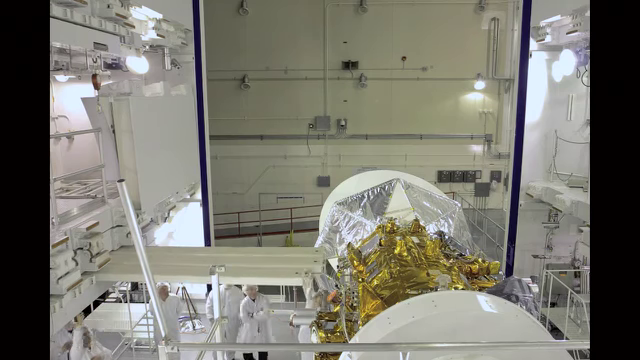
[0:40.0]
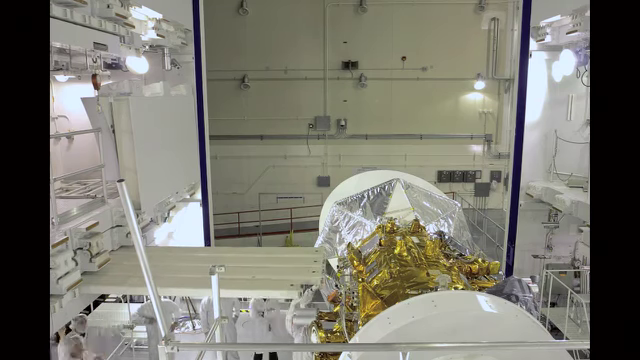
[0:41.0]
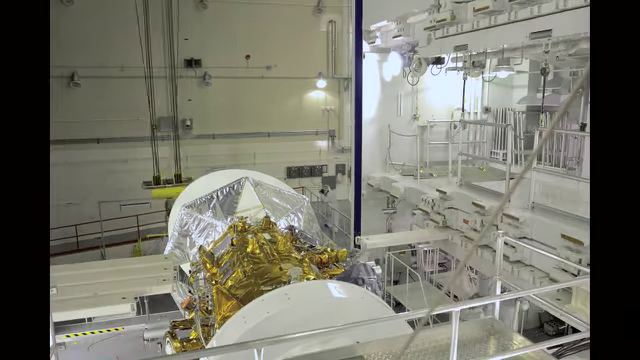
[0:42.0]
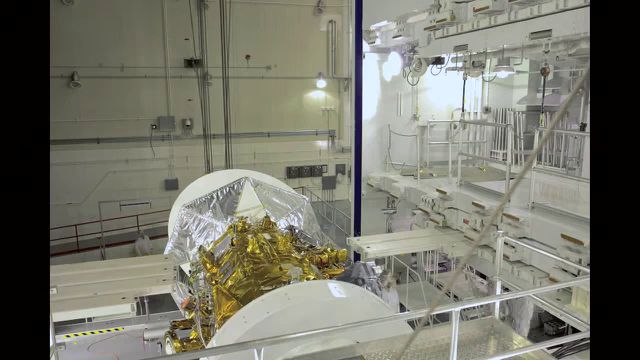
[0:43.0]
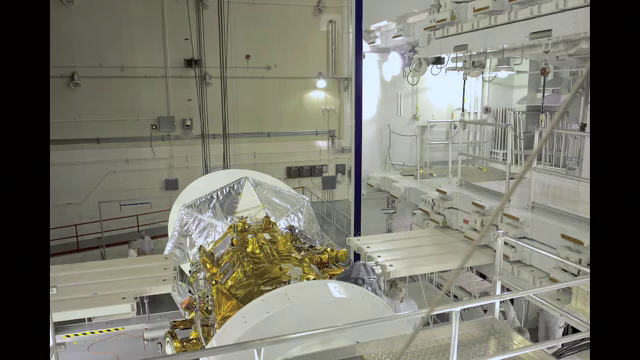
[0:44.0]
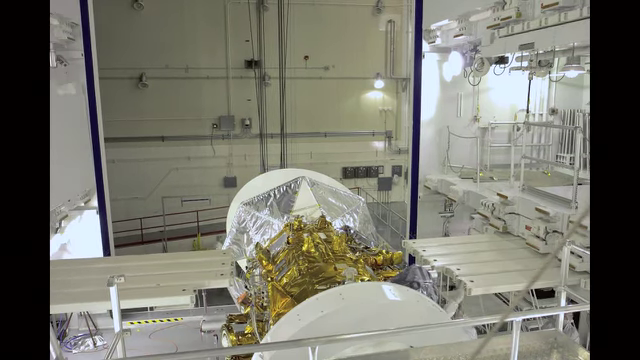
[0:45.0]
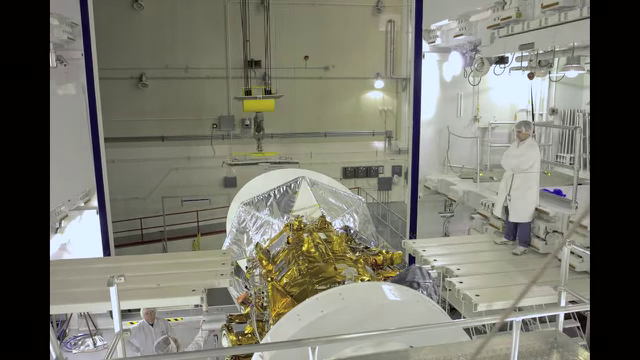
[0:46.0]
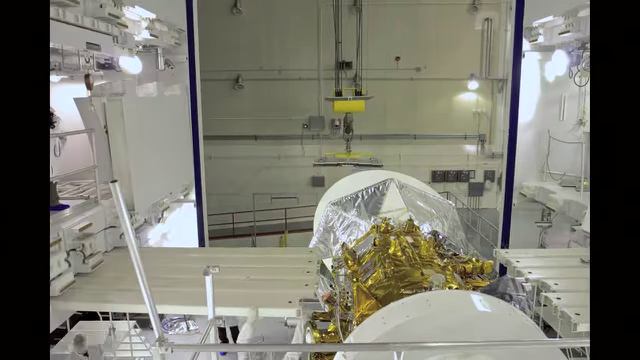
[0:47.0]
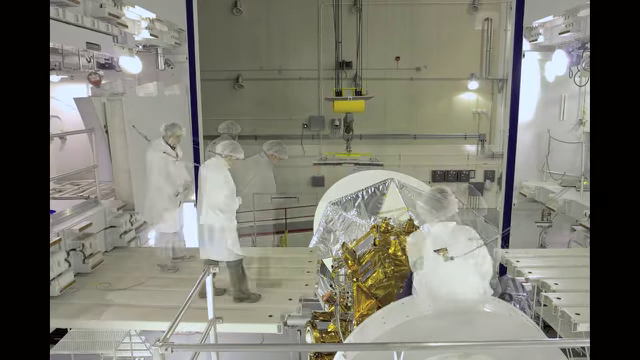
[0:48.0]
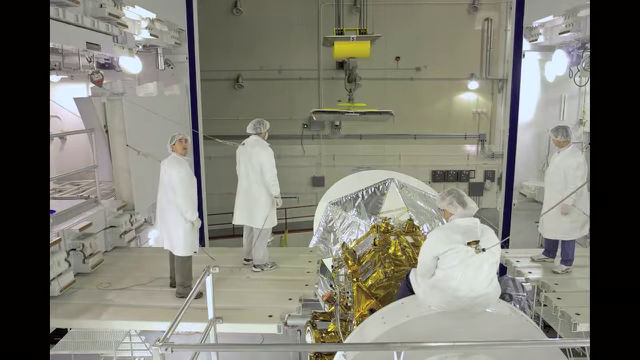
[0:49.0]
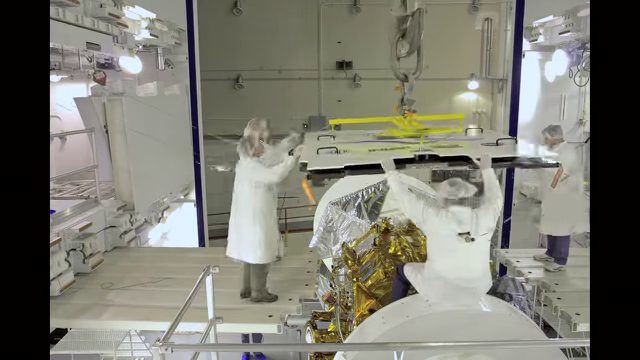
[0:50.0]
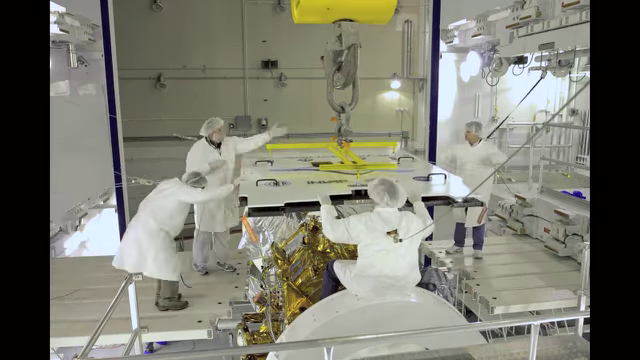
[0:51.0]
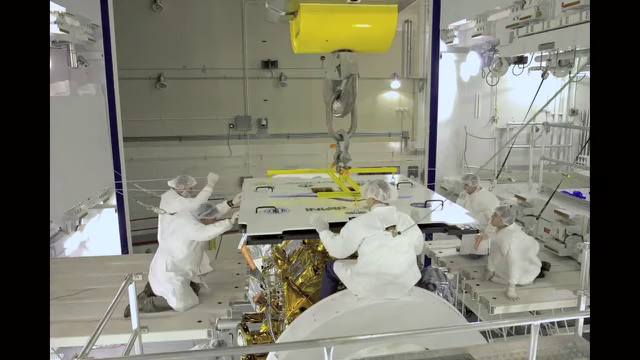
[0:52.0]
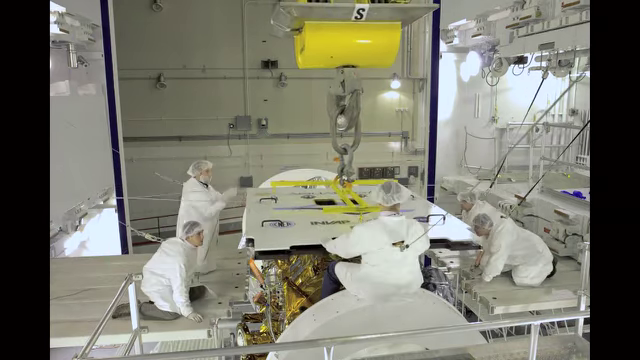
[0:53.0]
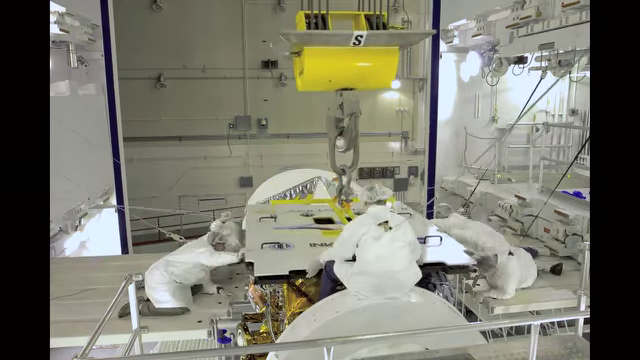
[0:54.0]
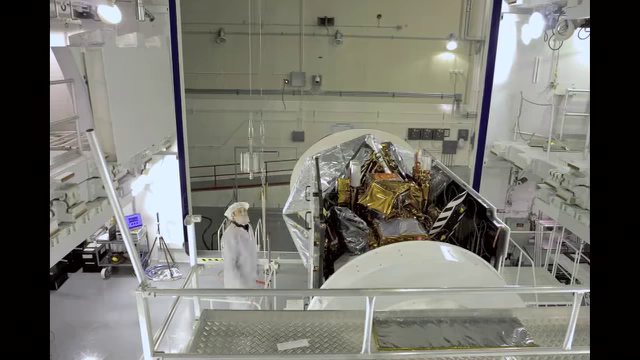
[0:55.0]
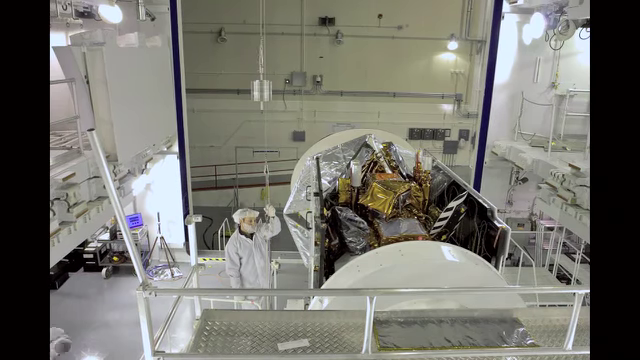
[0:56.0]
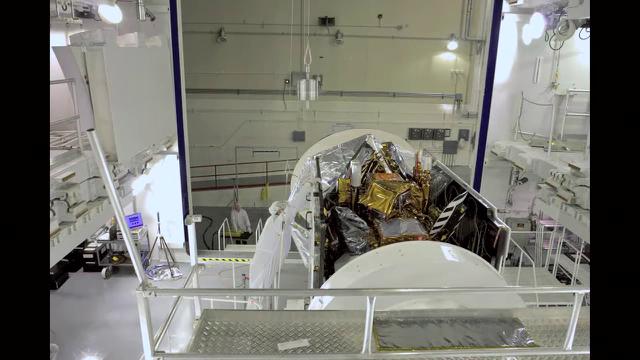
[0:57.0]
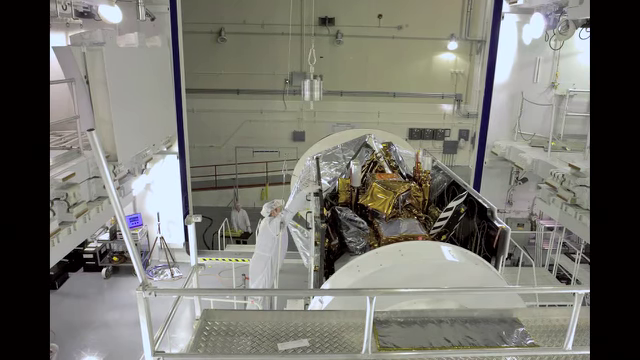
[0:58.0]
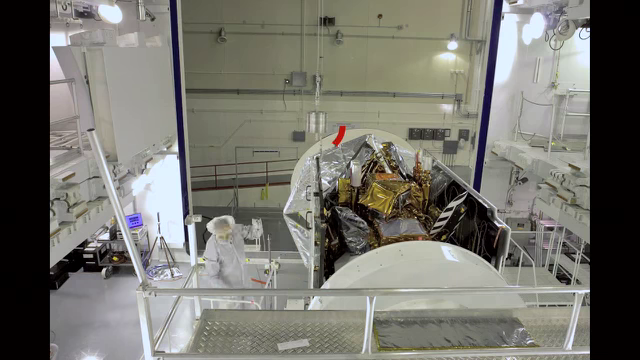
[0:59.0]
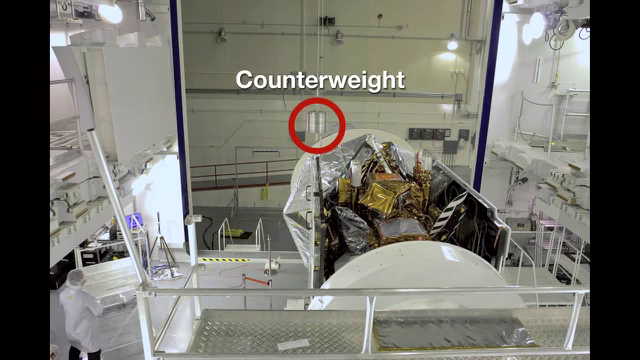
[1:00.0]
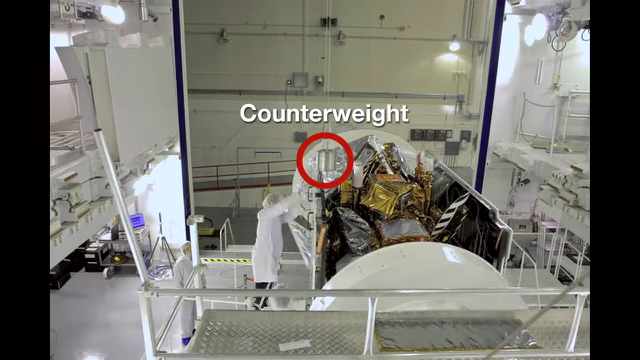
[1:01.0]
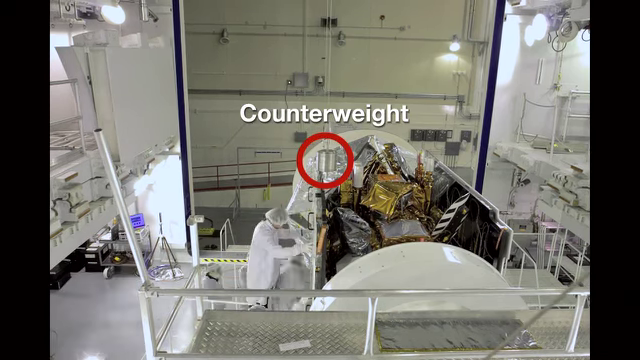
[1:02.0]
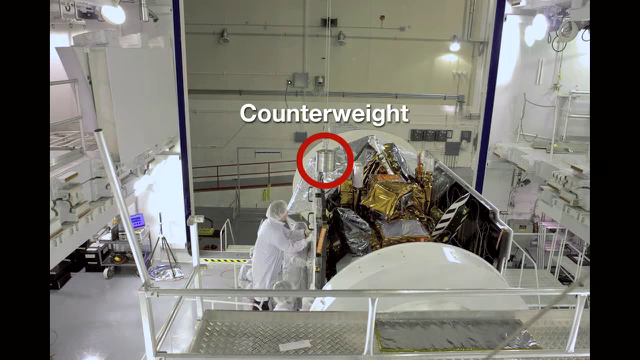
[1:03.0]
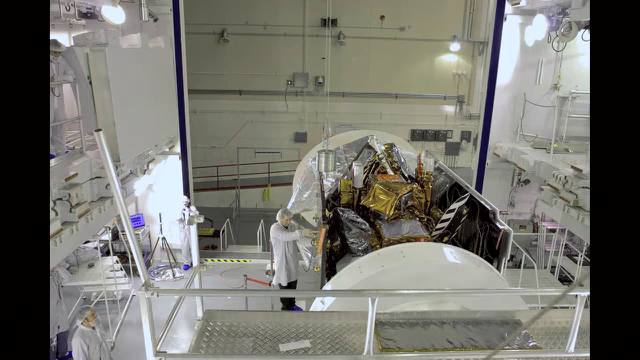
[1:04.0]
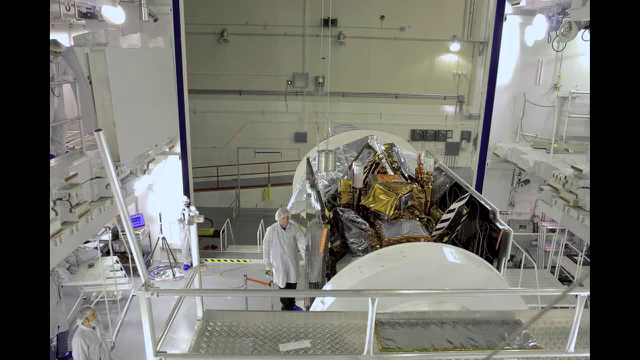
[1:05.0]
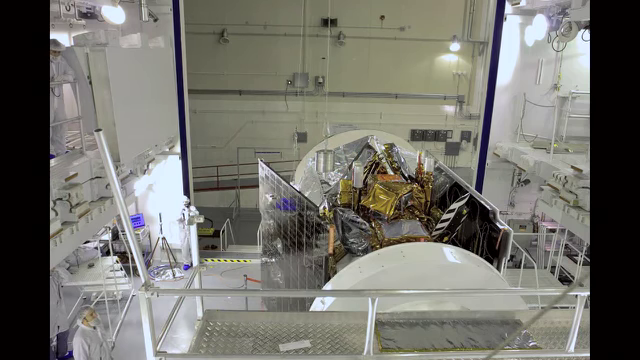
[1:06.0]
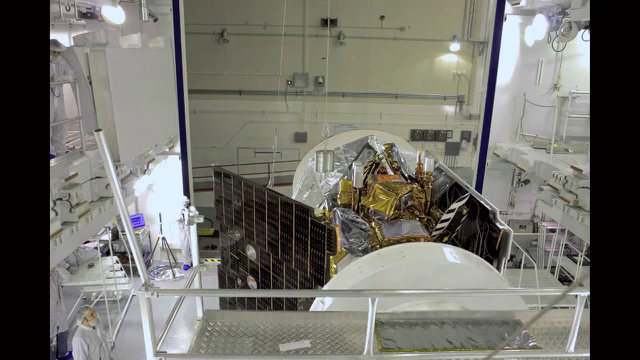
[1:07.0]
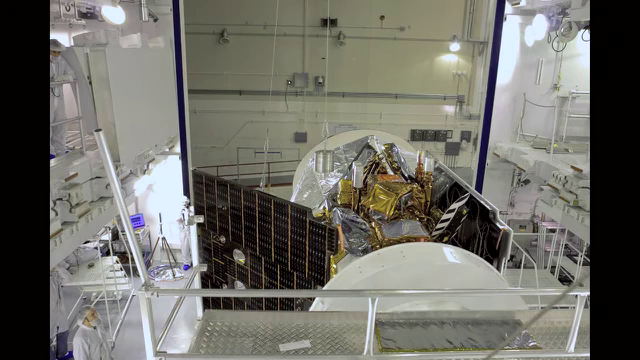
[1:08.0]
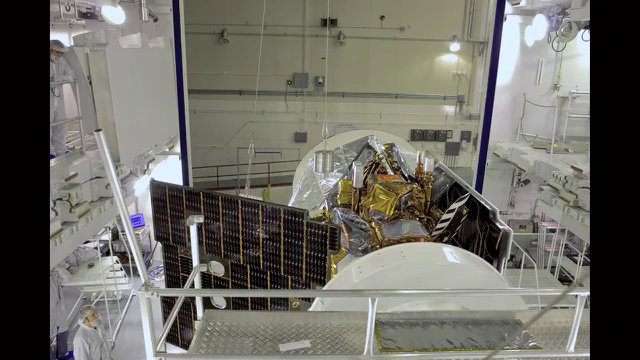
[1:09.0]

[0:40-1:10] The crew gets ready to connect parts; a count reaches six on one side and six or seven on the other. A crane lowers a heavy white panel with about four handles on it, and it is hooked up to Aquarius. The footage then moves in quick, choppy movements and circles something called a counterweight in red, pointing it out. In further choppy footage, the solar panels are put on.